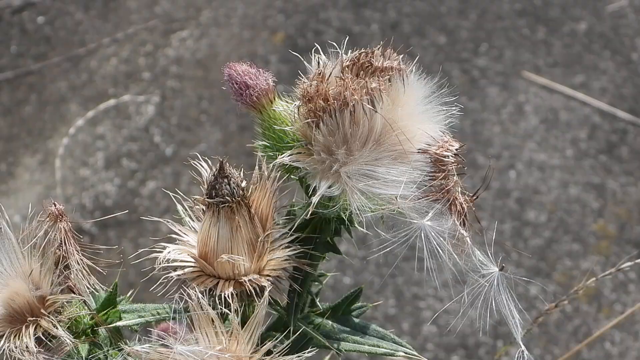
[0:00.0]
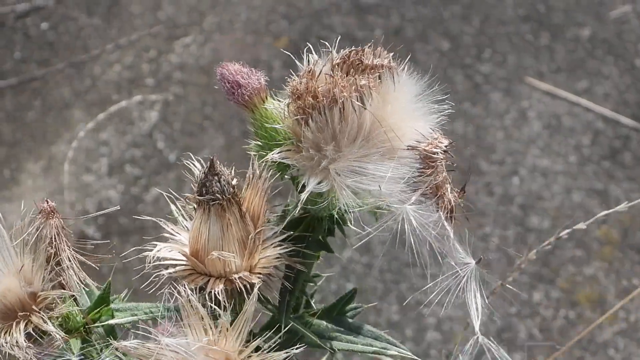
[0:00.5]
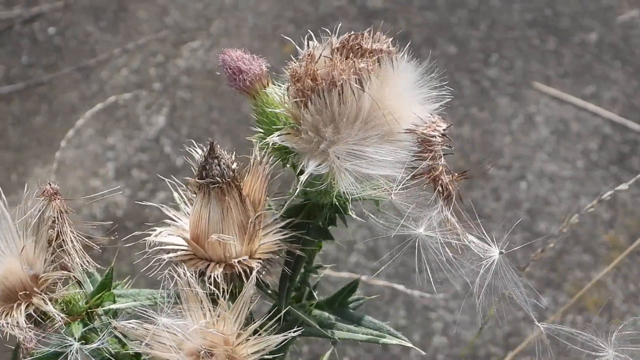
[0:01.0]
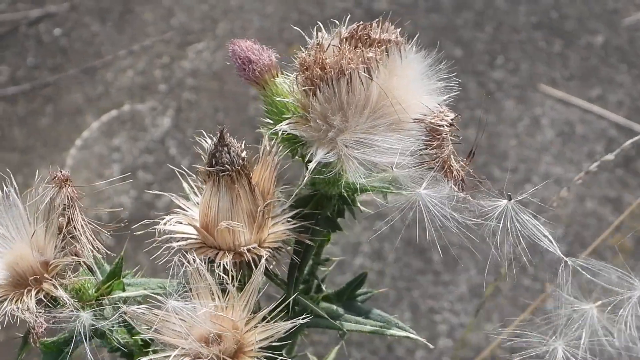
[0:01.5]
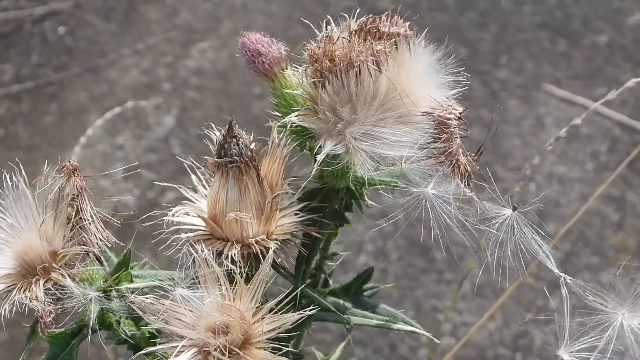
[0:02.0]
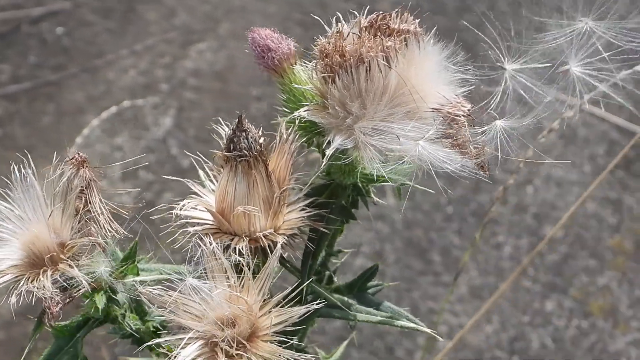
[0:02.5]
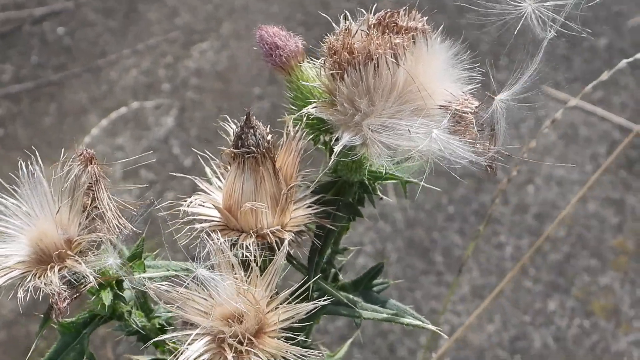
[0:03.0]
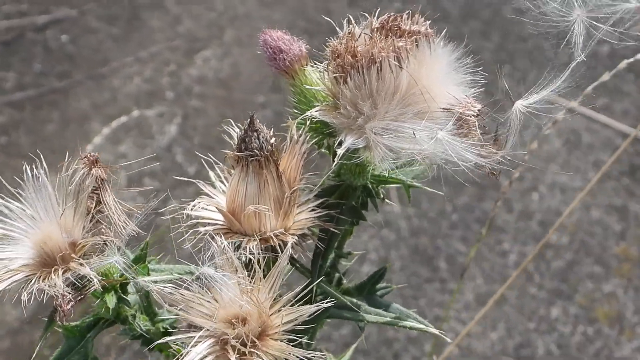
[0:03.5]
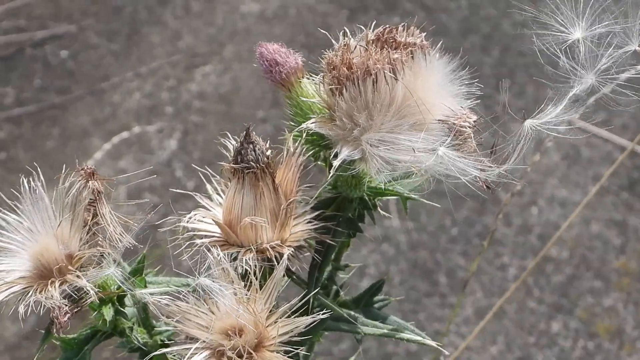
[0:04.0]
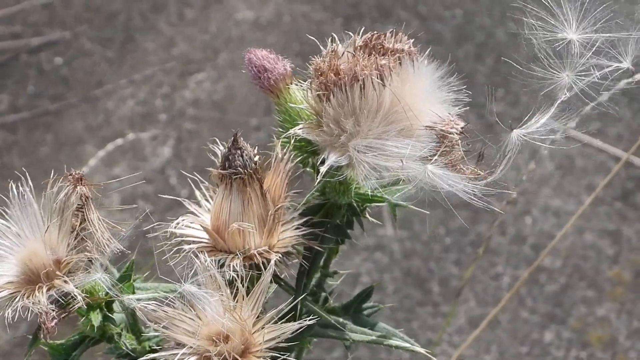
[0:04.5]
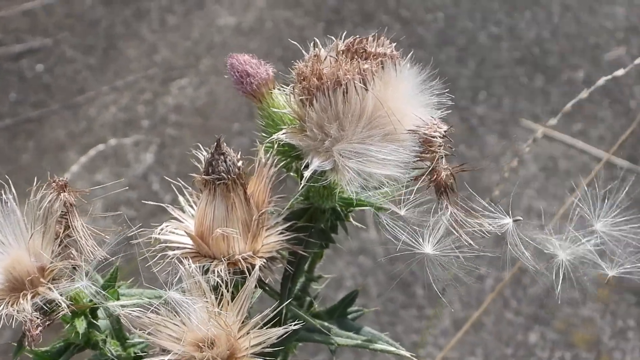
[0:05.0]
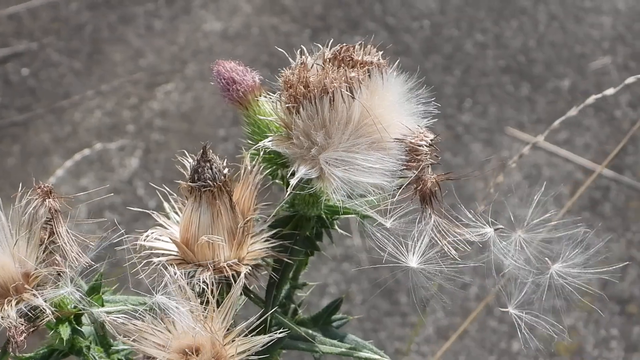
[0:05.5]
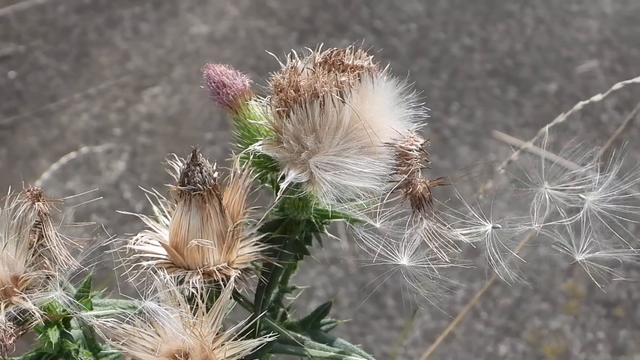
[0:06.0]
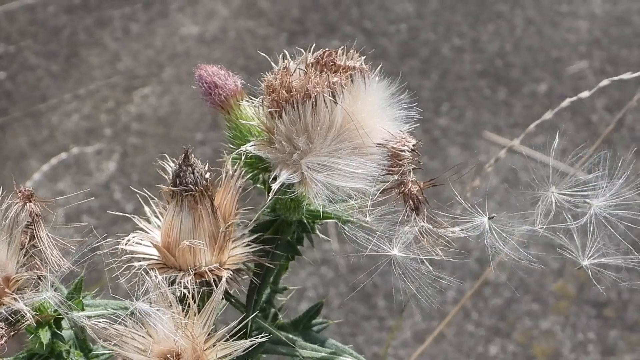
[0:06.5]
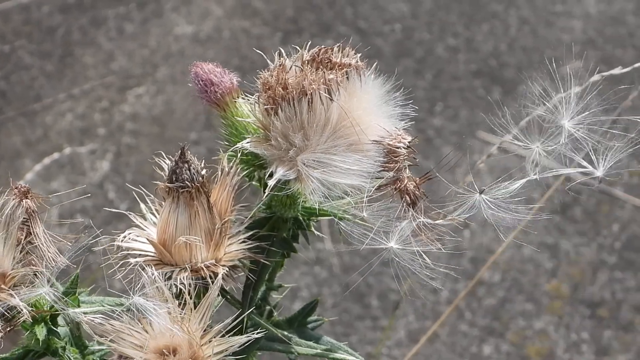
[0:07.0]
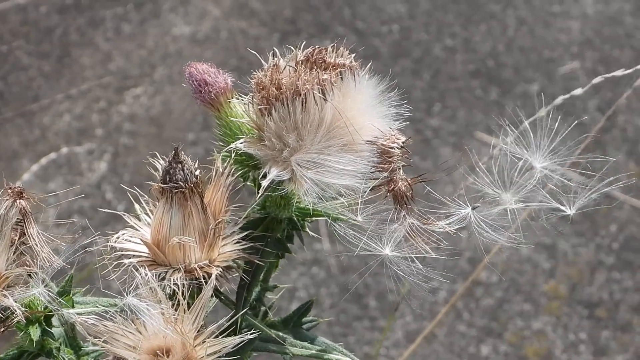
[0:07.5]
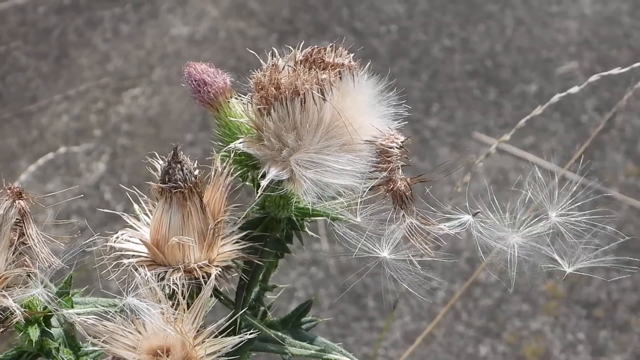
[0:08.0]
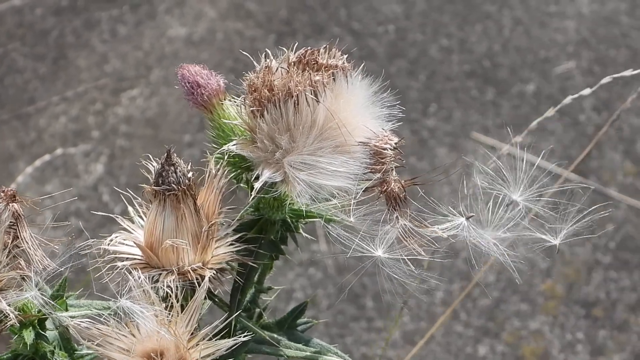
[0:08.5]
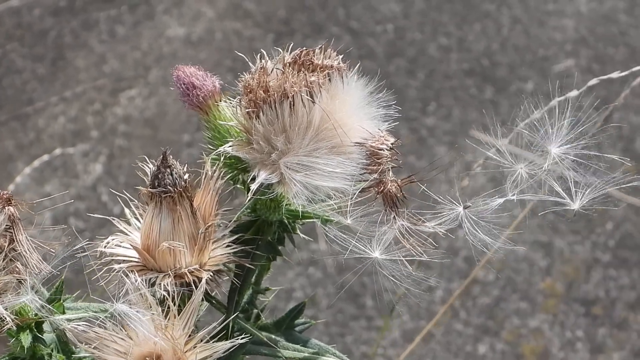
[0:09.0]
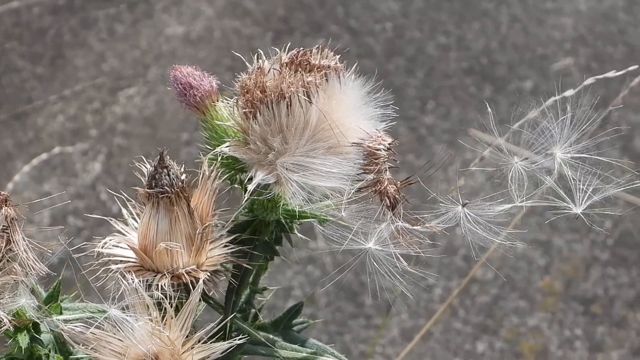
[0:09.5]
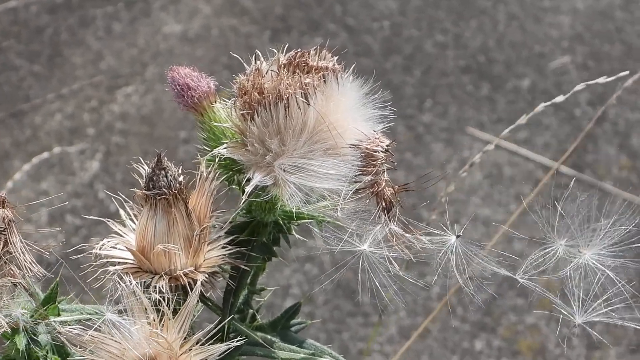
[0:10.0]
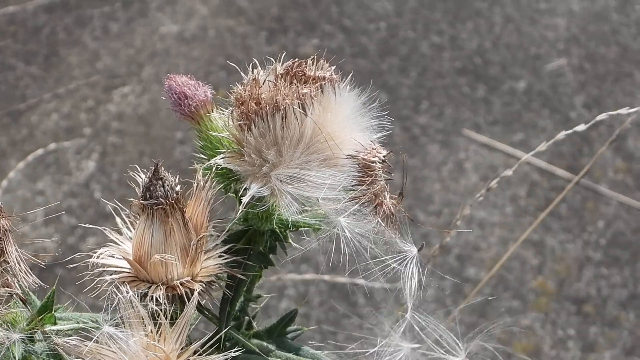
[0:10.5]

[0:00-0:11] A close-up shows some type of thistle, just a couple of plumes. There are three or four bulbs on the thistle, and one of them is starting to release some of its fluff, which is basically white, like wind seed, with some brown areas in the middle. One bulb is fully open; the one next to it is pretty much closed, its middle closed like a flower bulb; there is an open one below that and another open one next to it on the left. The fully open thistle has something like a pink bloom coming out of it. Everything is moved gently by a breeze, blowing in the wind. The background is hard to make out and might be a field of thistle.